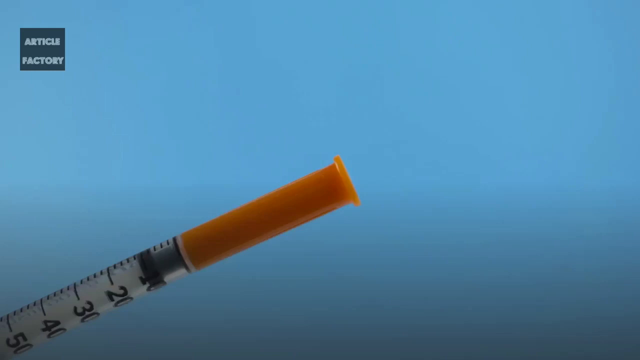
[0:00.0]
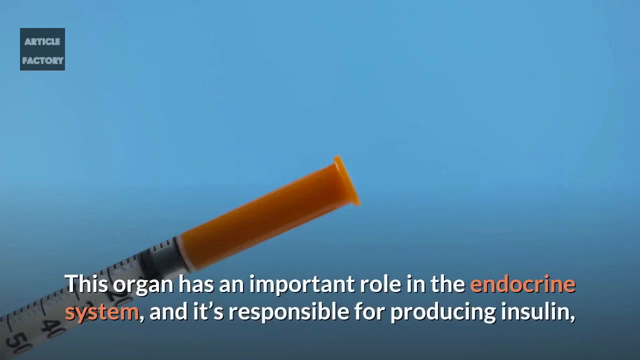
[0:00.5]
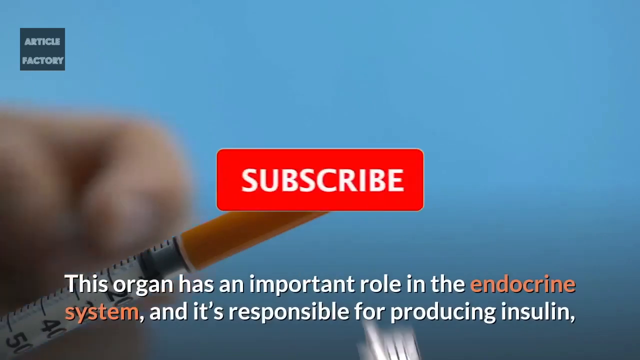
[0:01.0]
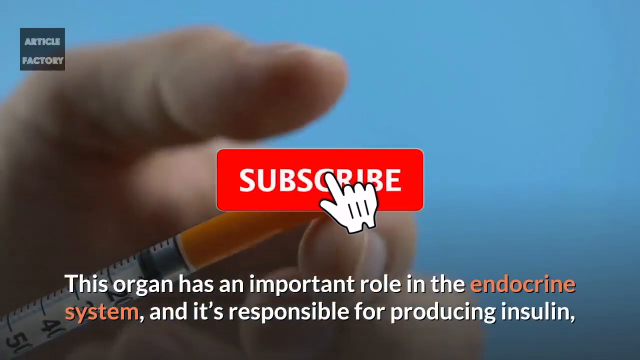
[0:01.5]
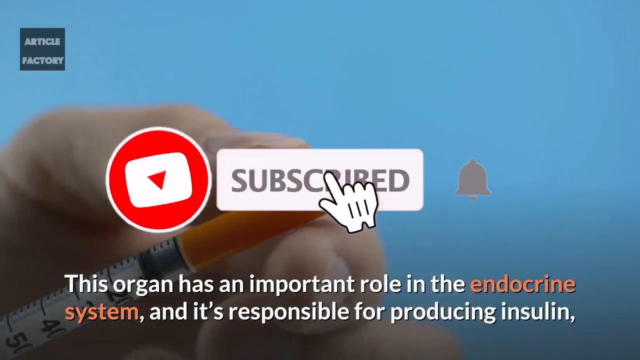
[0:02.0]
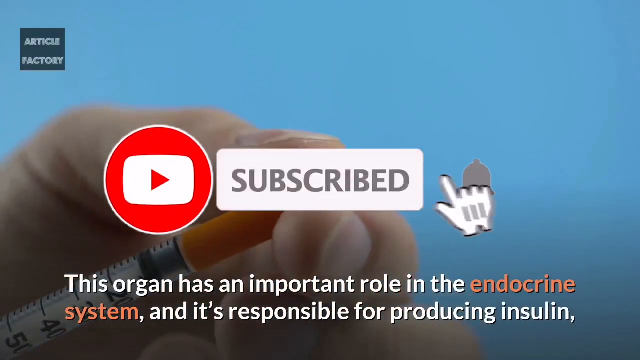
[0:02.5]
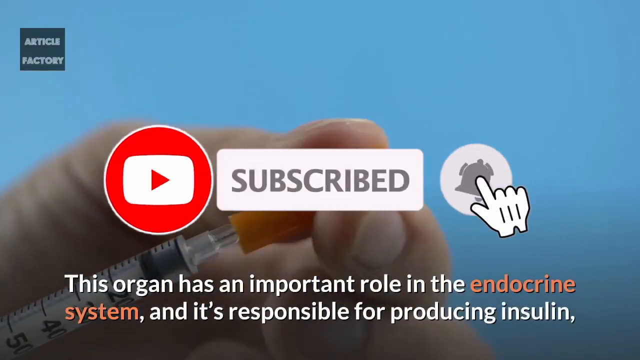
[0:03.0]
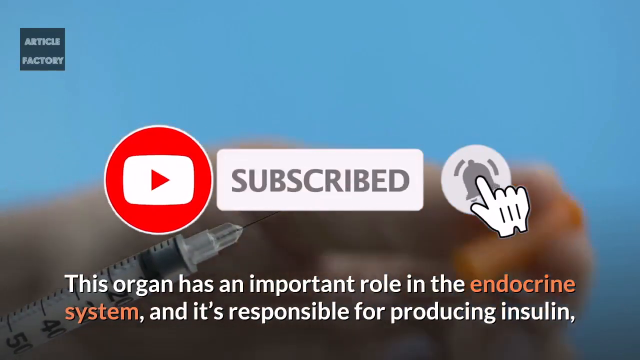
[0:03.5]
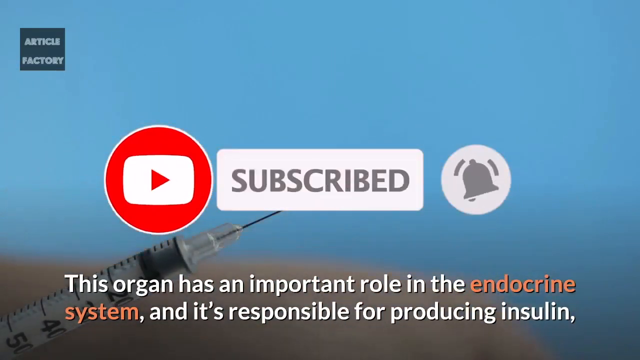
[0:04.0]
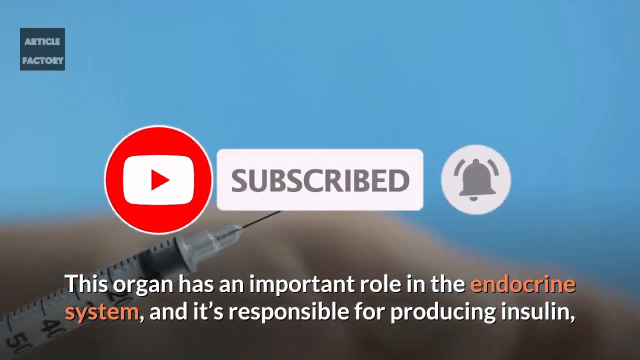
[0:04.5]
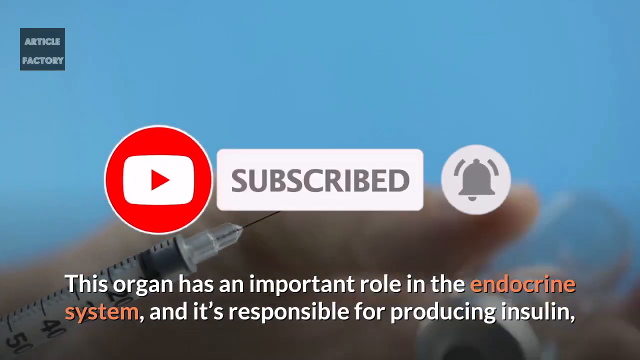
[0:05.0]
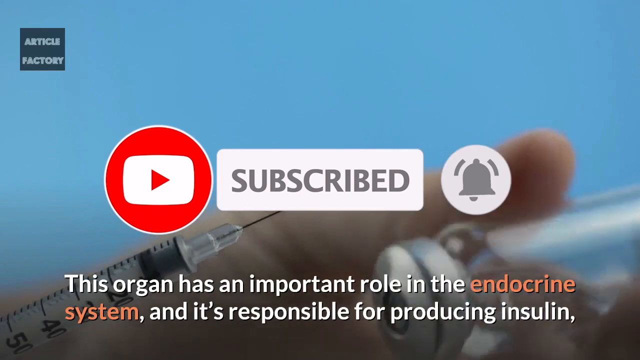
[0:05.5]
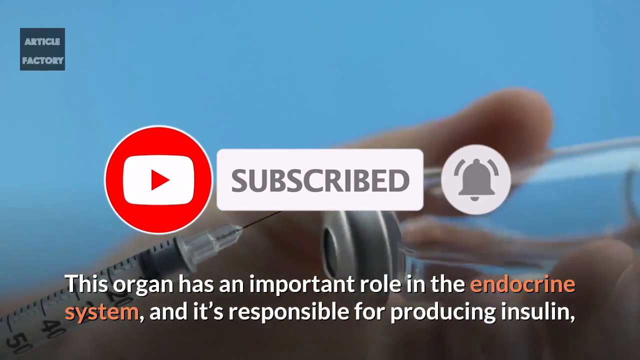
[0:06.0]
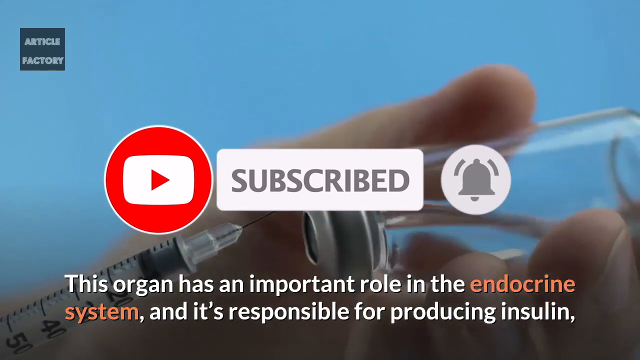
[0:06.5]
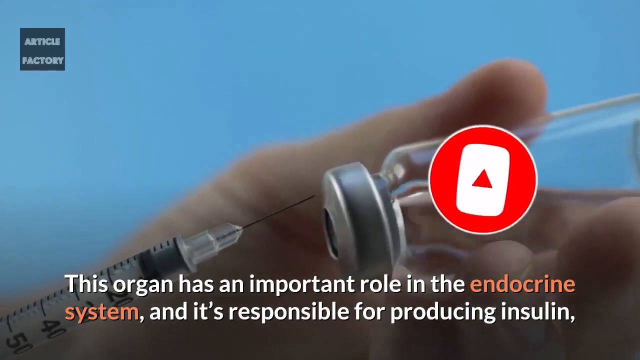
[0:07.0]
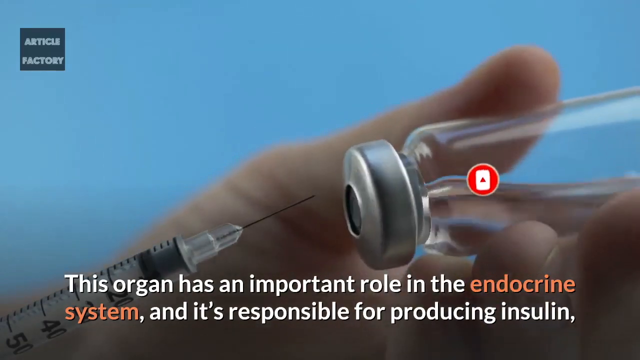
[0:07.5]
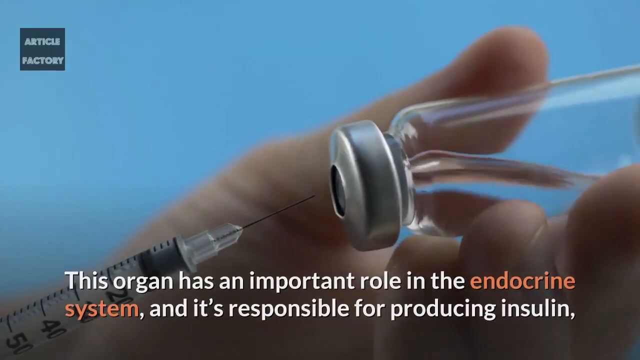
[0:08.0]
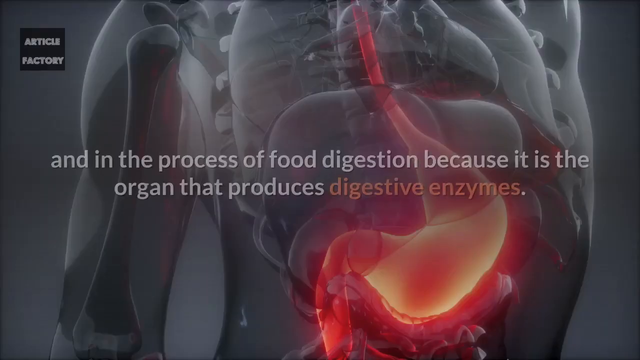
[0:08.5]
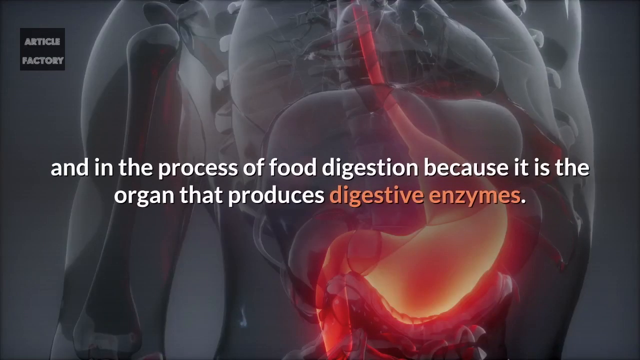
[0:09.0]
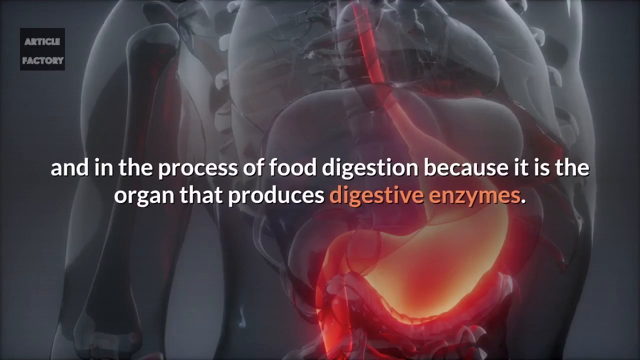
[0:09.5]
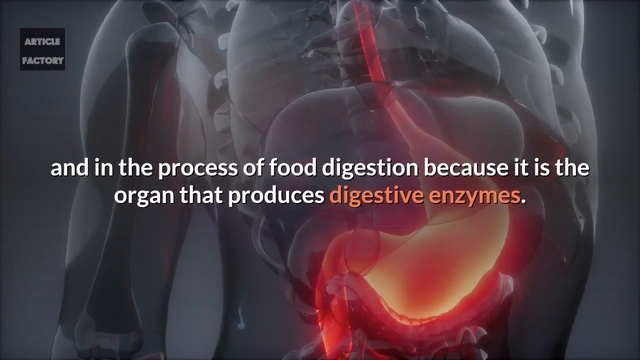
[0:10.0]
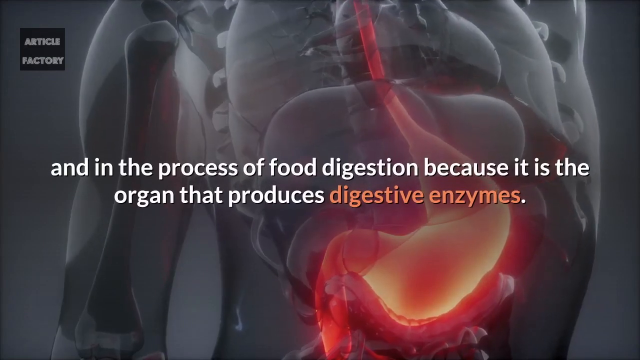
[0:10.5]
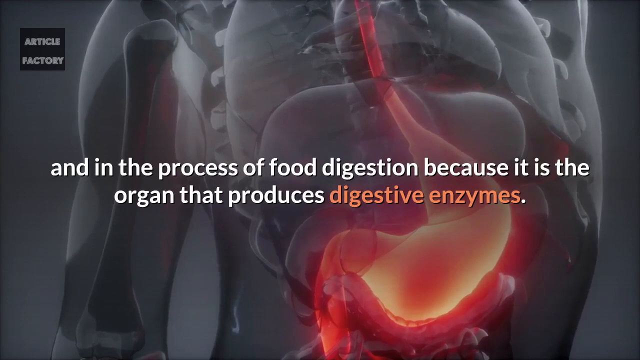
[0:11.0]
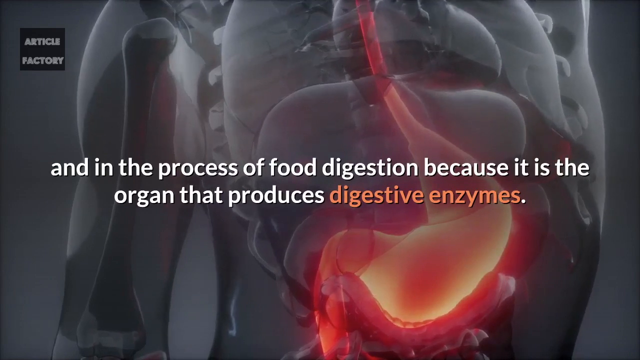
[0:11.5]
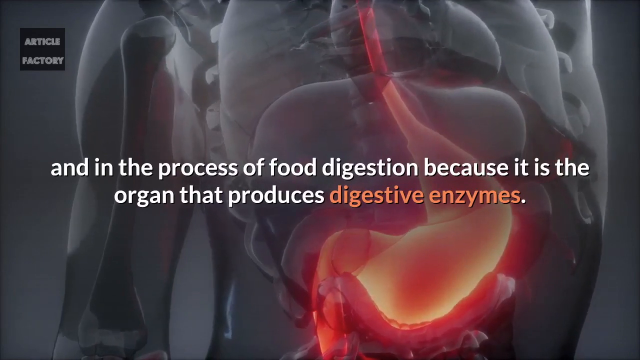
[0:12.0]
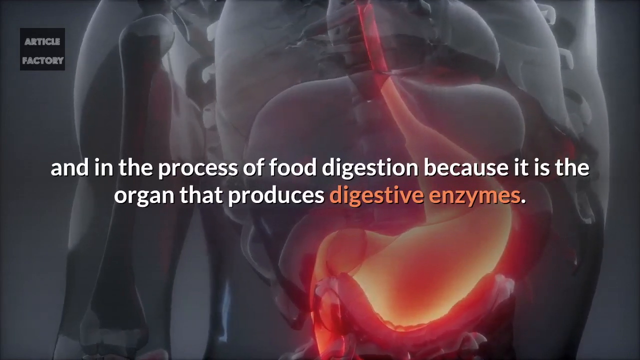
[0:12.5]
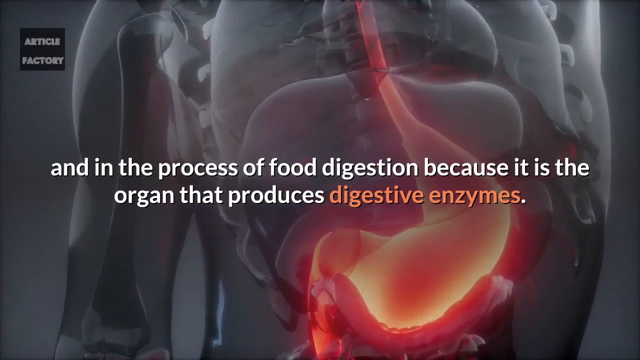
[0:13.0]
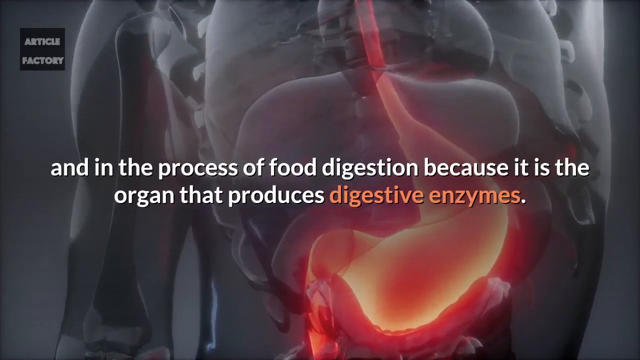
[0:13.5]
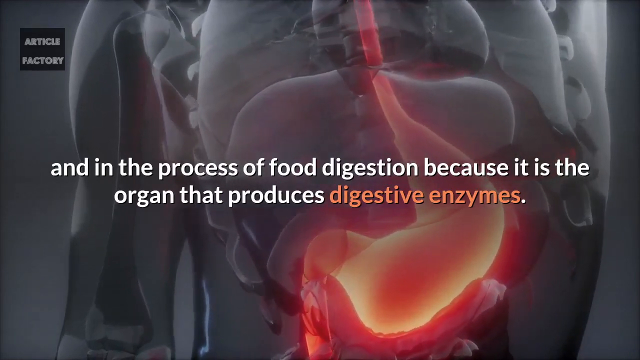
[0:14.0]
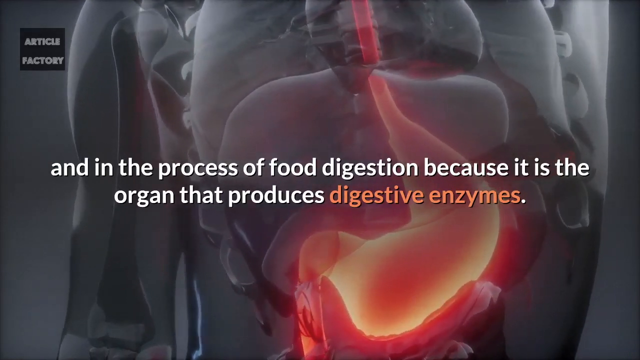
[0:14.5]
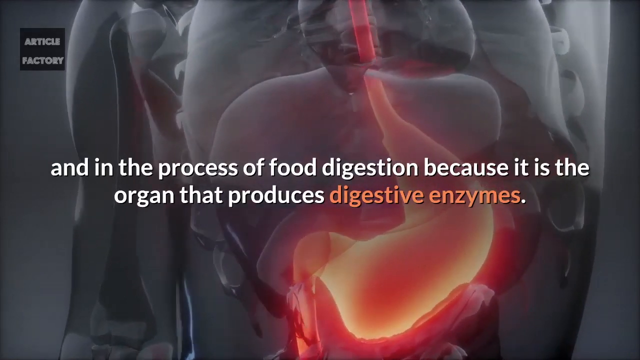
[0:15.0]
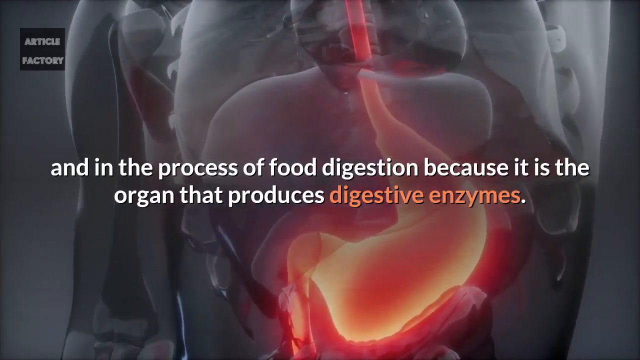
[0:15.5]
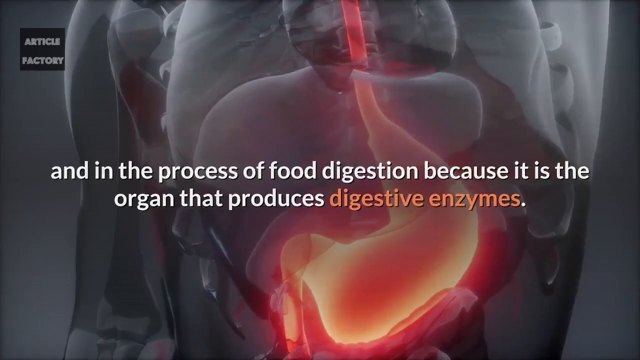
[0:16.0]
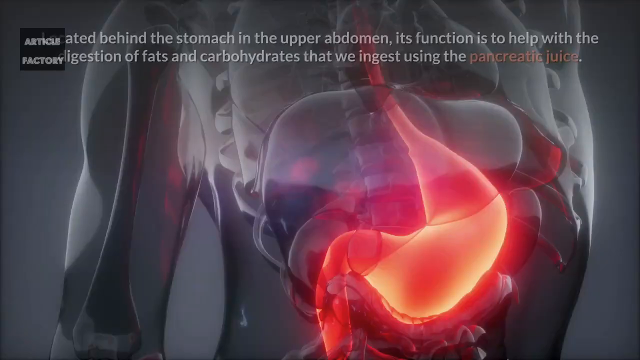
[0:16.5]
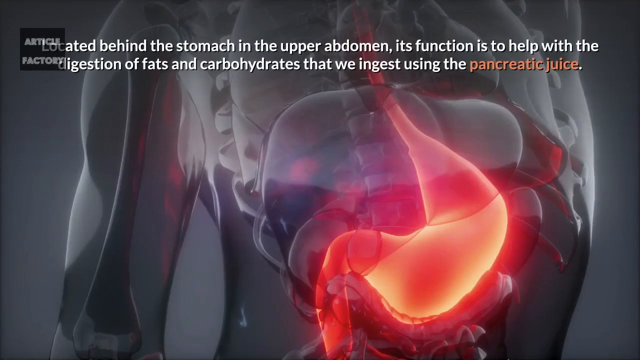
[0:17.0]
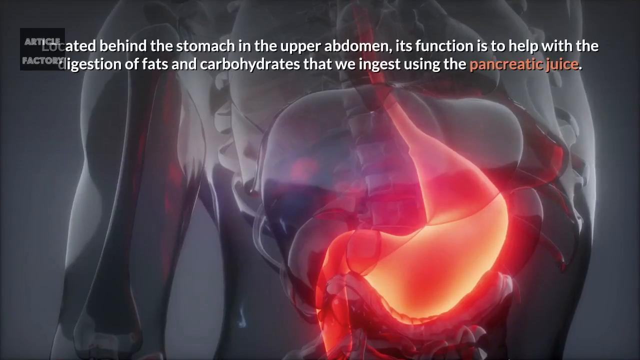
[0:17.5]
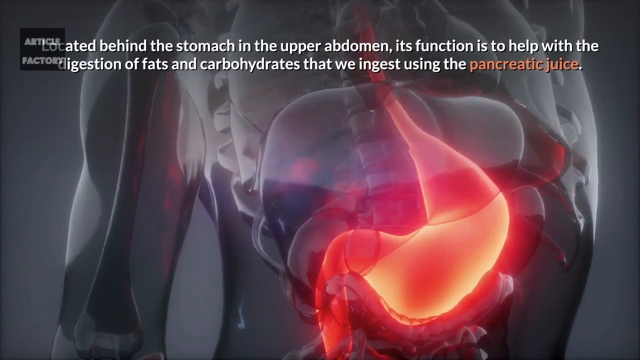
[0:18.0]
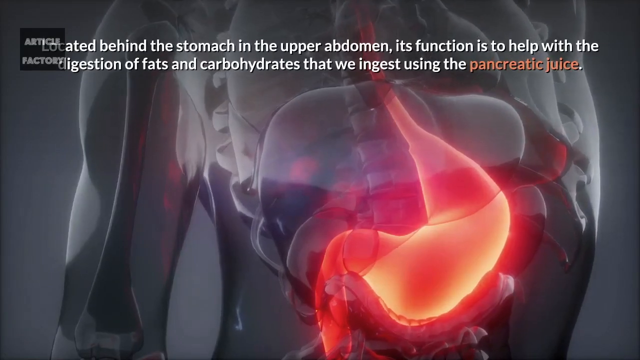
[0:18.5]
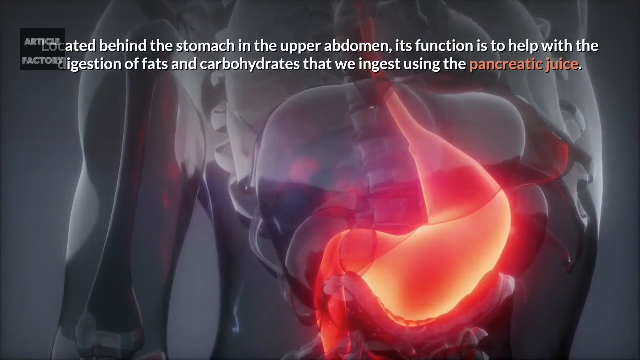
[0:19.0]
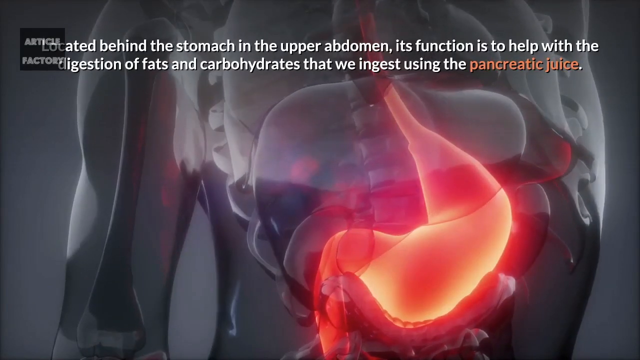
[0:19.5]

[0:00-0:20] On-screen text reads: "this organ has an important role in the endocrine system and is responsible for producing insulin and in the process of food digestion because it is the organ that produces digestive enzymes." An insulin shot pen is shown, and someone draws insulin out of a little bottle. The text continues: "Located behind the stomach in the upper abdomen, its function is to help with the digestion of fats and carbohydrates that we ingest using the pancreatic juice."